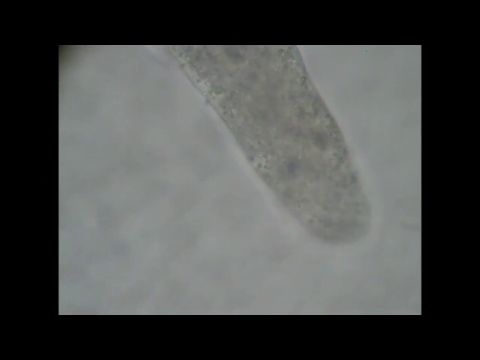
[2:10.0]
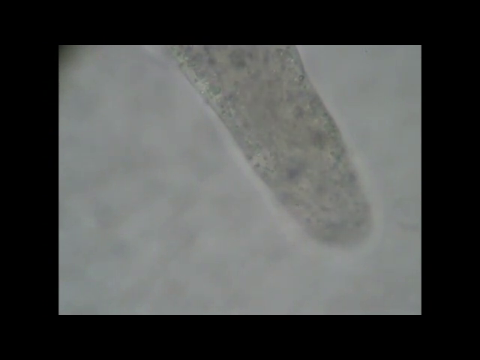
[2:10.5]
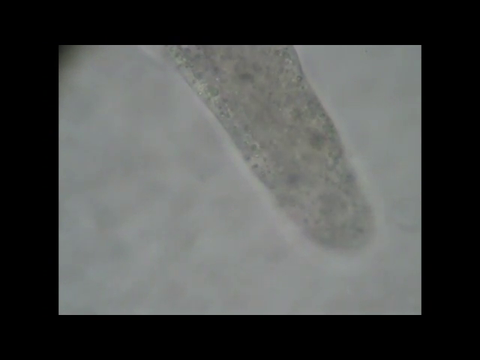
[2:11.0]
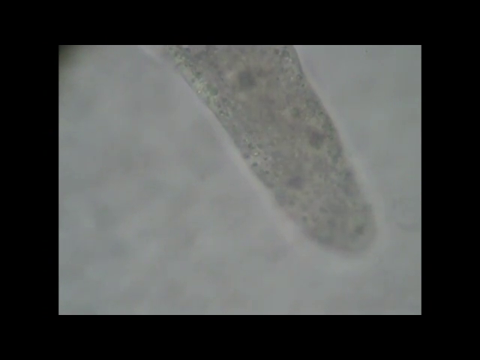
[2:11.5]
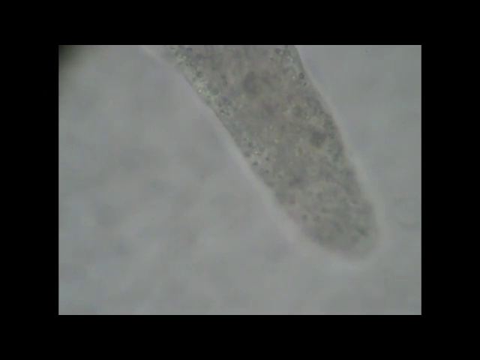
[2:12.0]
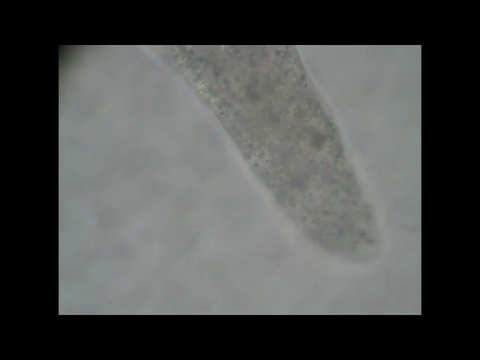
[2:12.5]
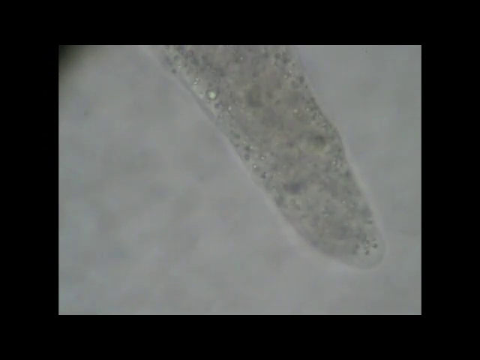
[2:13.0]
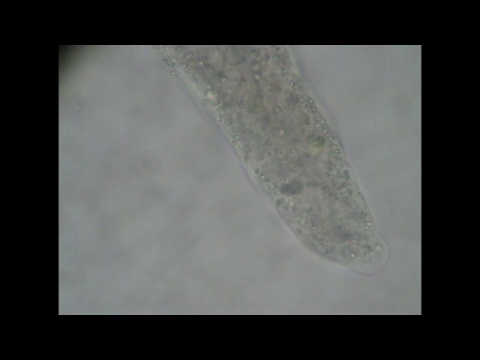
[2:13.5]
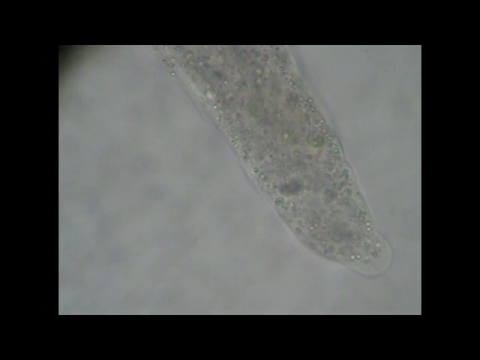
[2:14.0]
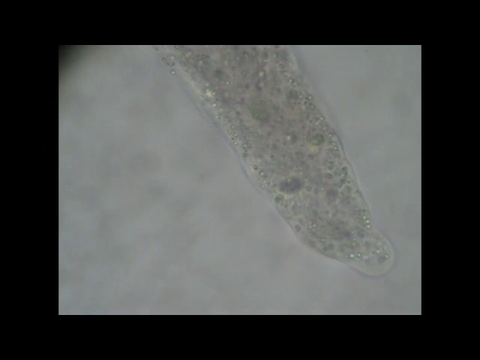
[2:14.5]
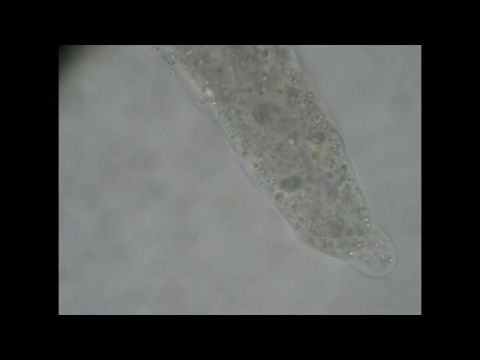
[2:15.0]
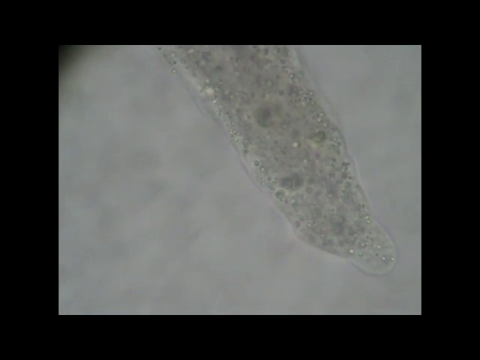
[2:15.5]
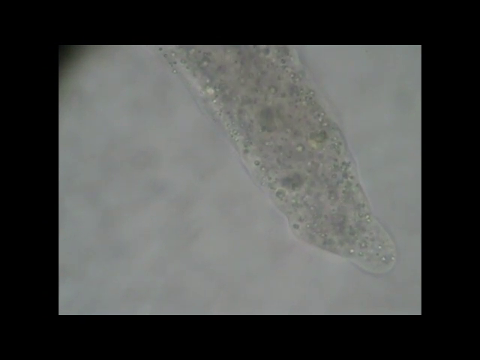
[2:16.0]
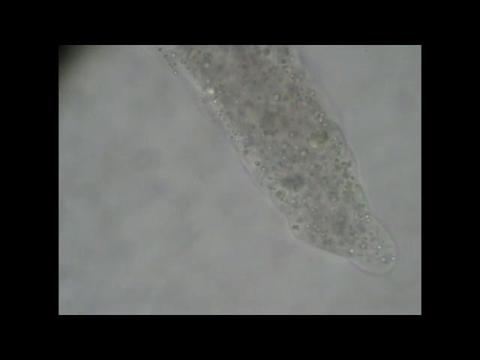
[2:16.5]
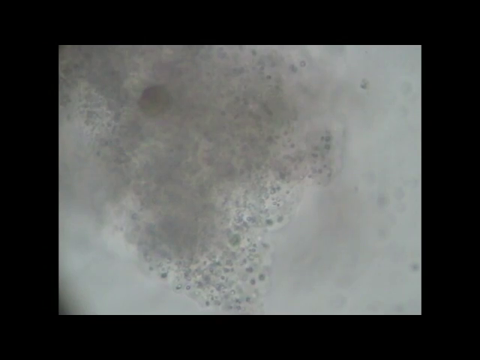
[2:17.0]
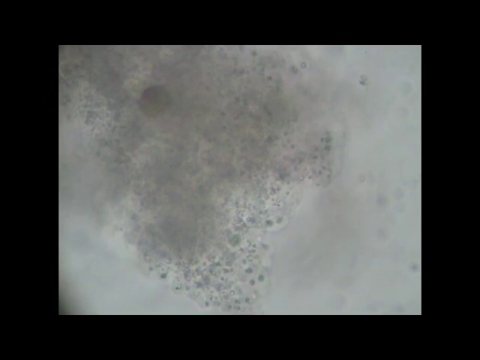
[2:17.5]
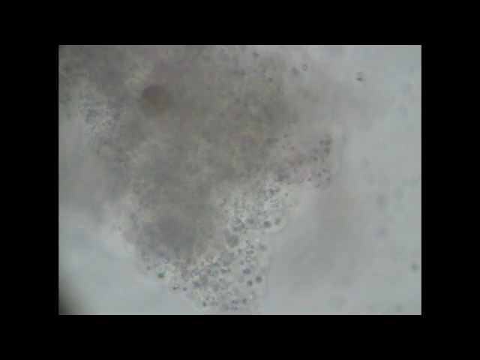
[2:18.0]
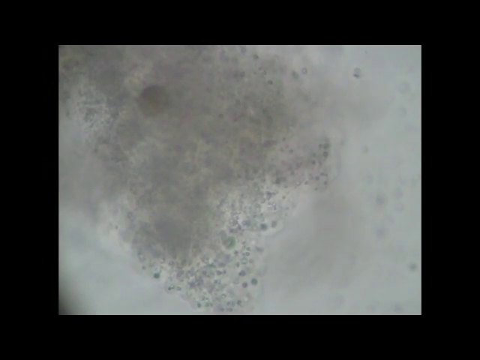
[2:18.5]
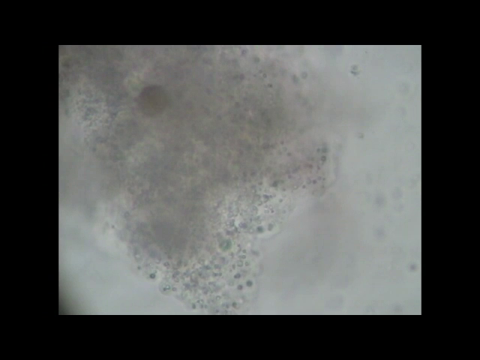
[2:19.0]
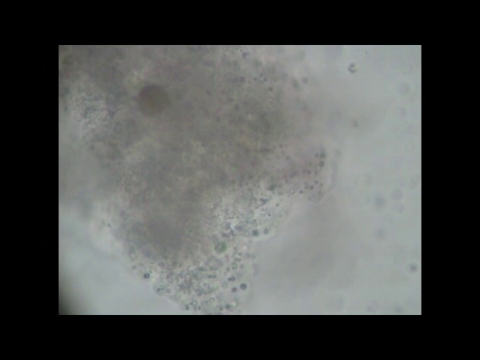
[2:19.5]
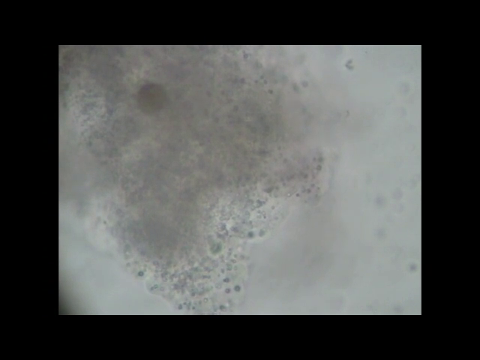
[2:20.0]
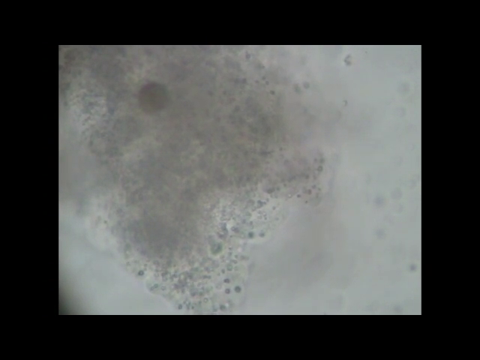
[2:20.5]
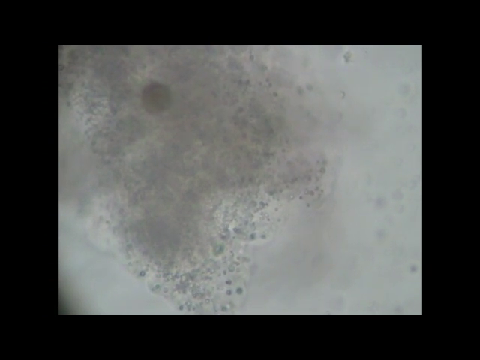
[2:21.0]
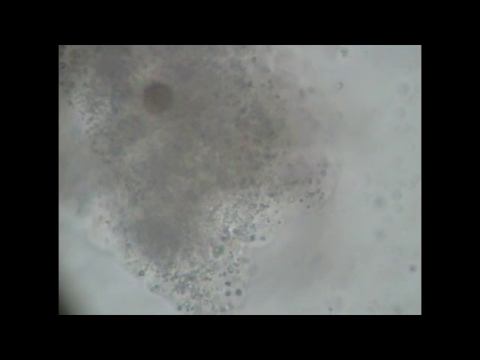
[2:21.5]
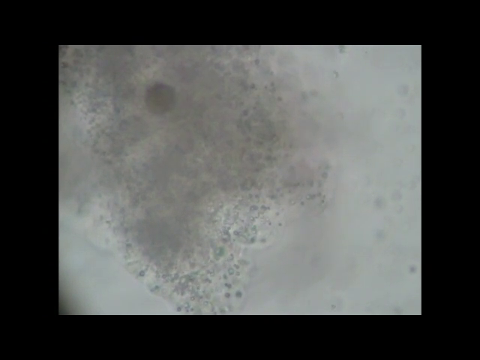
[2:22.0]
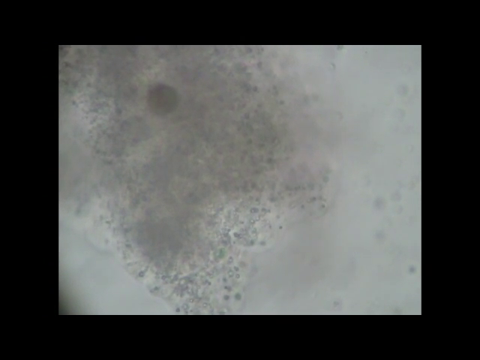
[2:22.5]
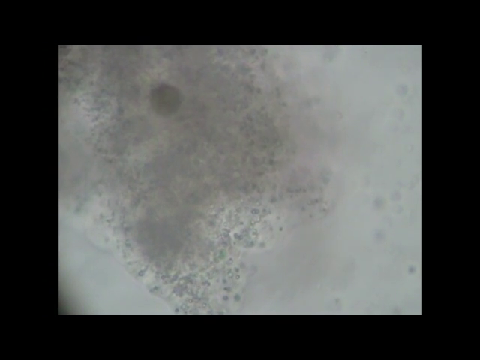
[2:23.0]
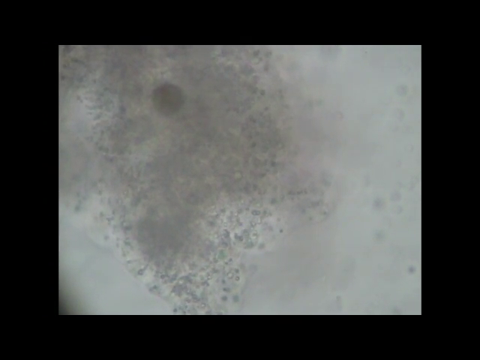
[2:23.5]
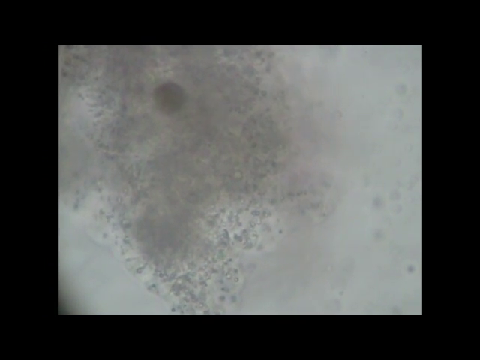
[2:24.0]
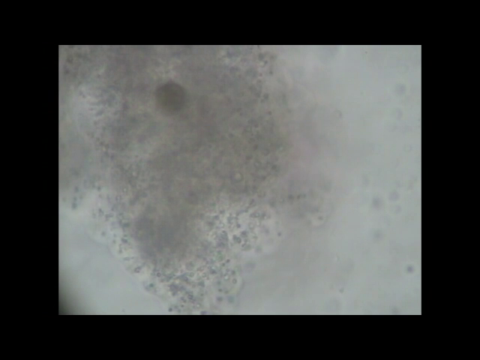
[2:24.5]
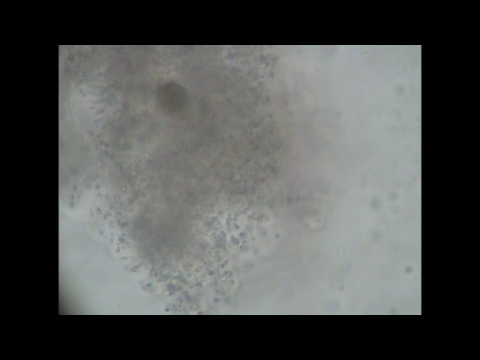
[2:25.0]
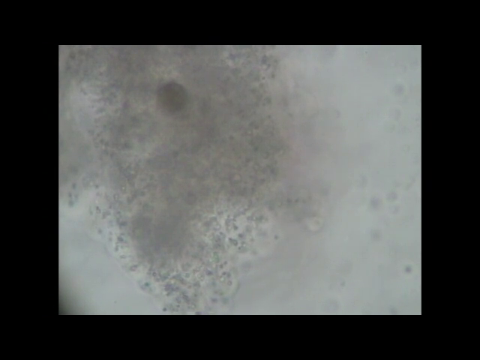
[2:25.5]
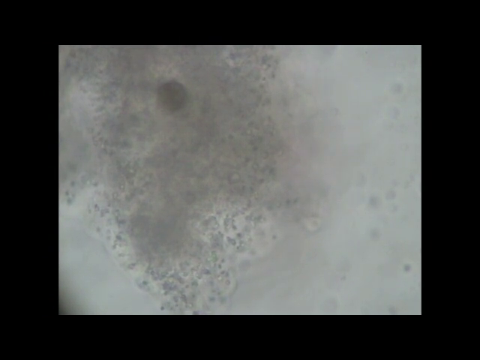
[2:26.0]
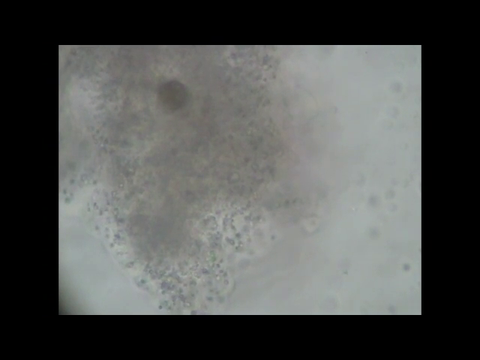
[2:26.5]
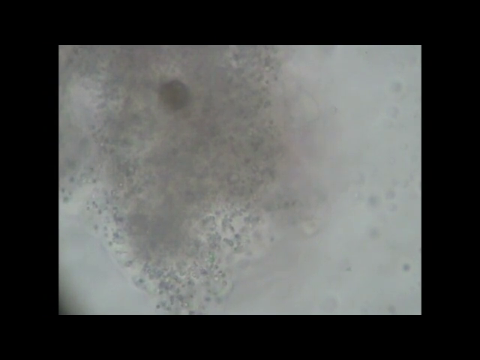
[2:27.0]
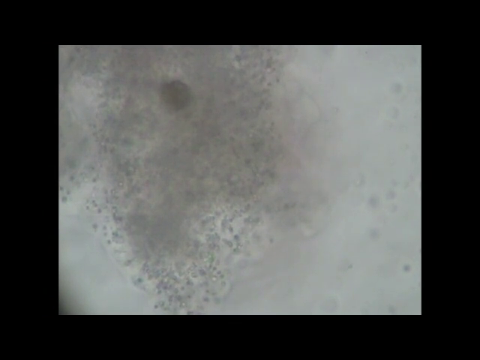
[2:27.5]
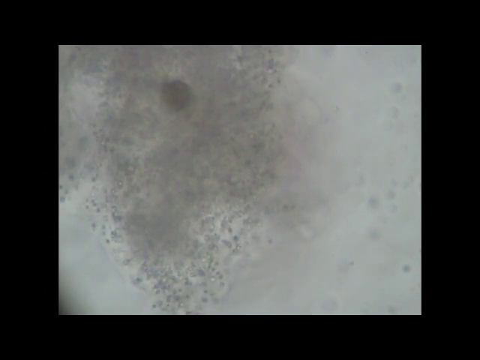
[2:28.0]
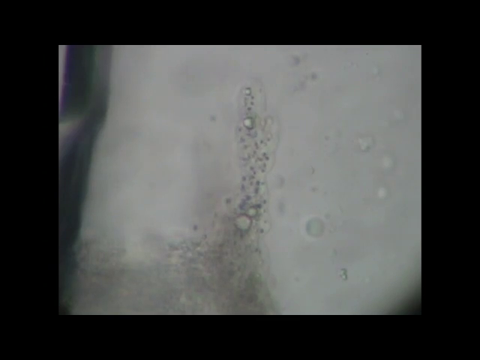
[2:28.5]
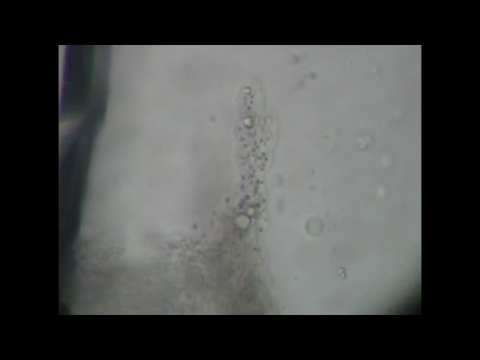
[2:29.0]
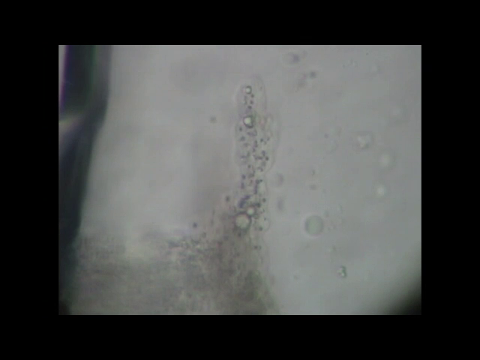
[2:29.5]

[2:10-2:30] The flow of the centipede-like organism, or river of small microscopic objects, moves across the screen again. The scene then changes to another view under a microscope, showing what looks like a larger mass: possibly an organism with multiple cells or debris inside, or one large cell with its interior visible. Just off-center to the upper left is a round spherical object, which would be the nucleus if this were one cell, and some of its outer edges are visible, possibly close-up views of different organelles. The view zooms in and out, and there is movement. The mass of the organism or cell is floating and kind of turning to the right in a circular motion.